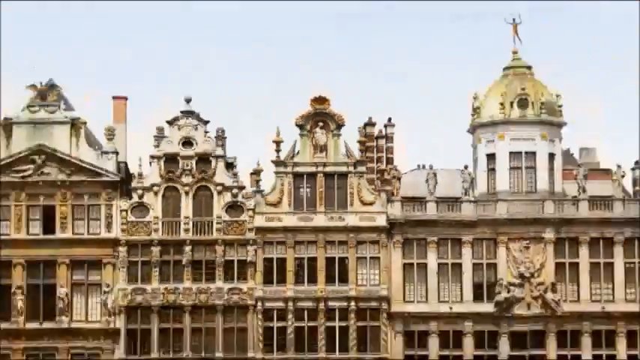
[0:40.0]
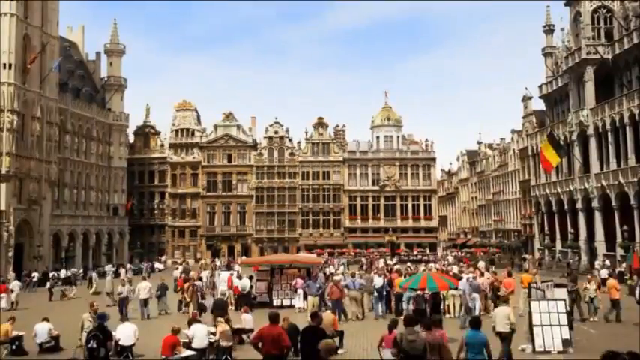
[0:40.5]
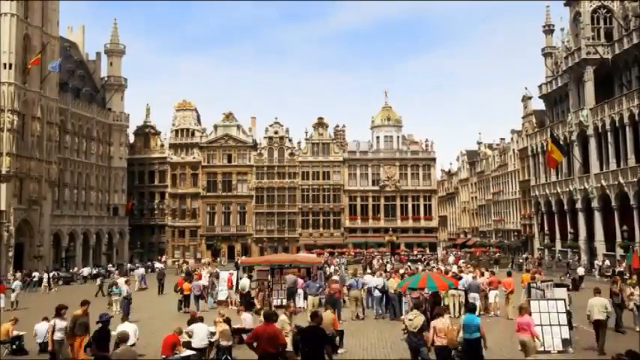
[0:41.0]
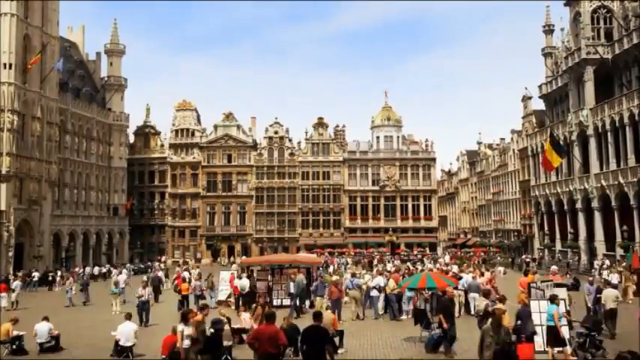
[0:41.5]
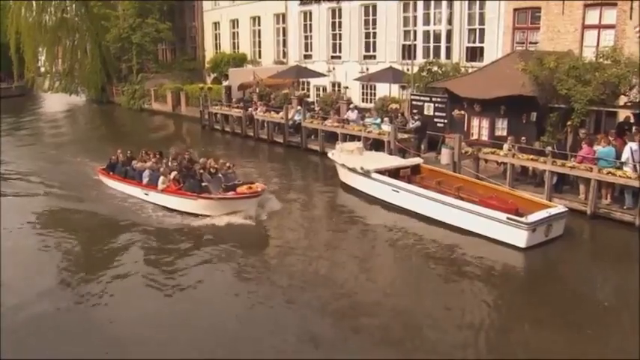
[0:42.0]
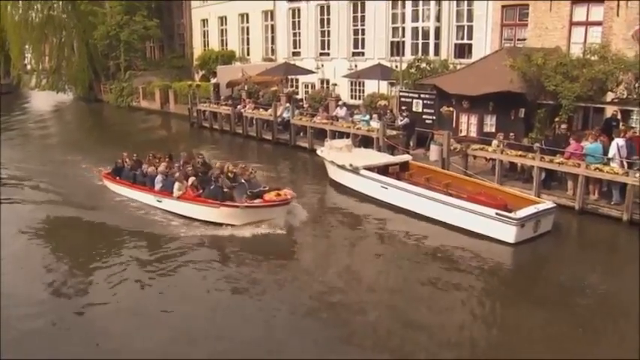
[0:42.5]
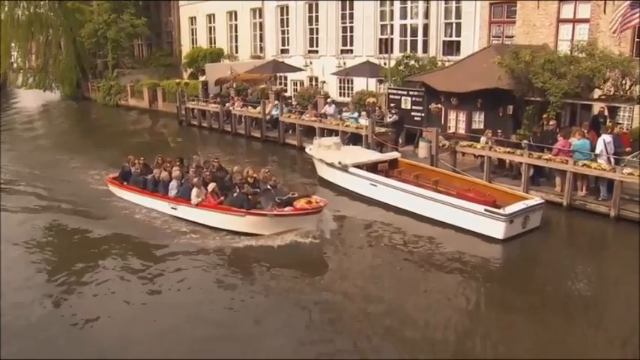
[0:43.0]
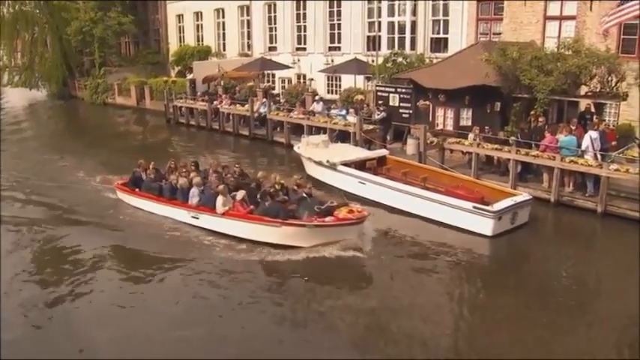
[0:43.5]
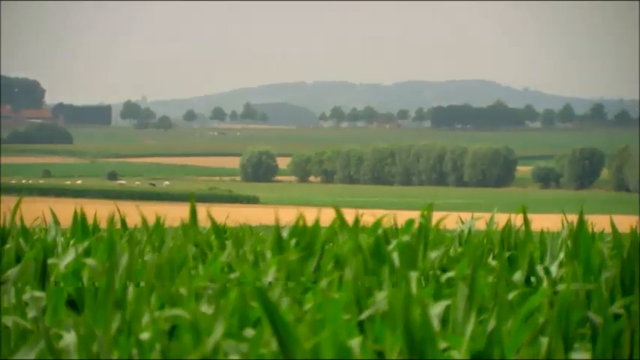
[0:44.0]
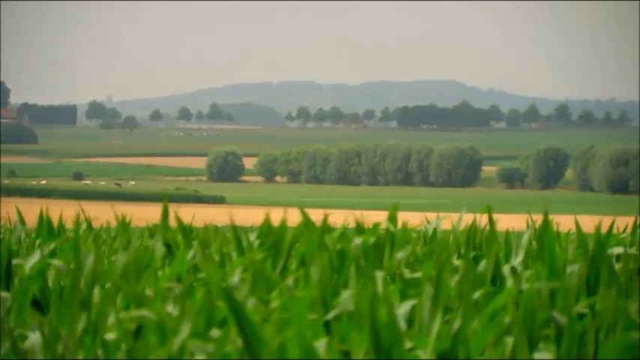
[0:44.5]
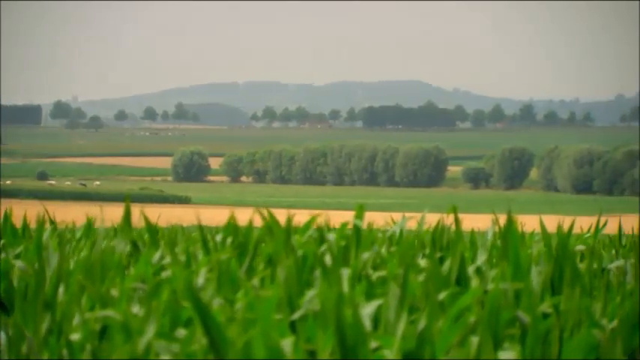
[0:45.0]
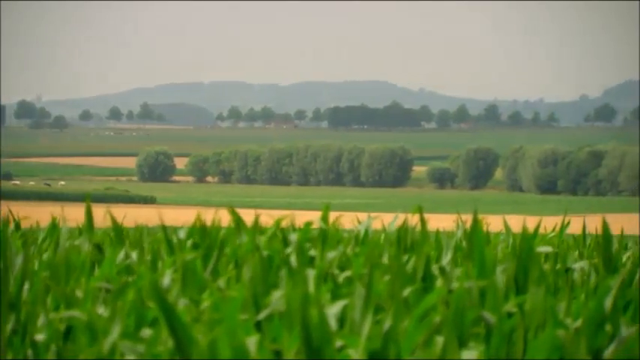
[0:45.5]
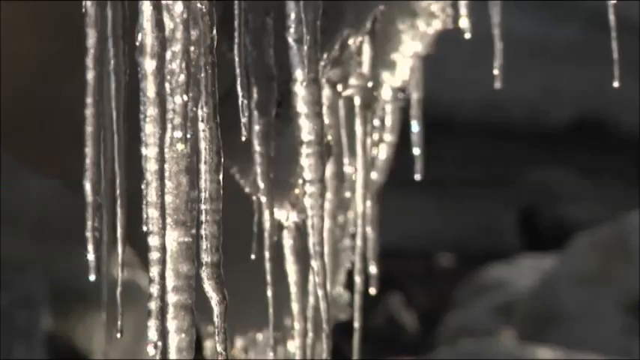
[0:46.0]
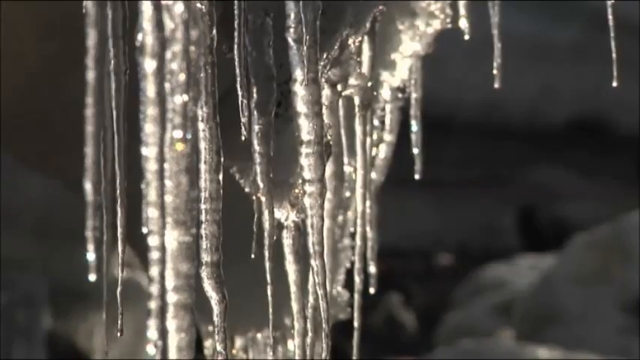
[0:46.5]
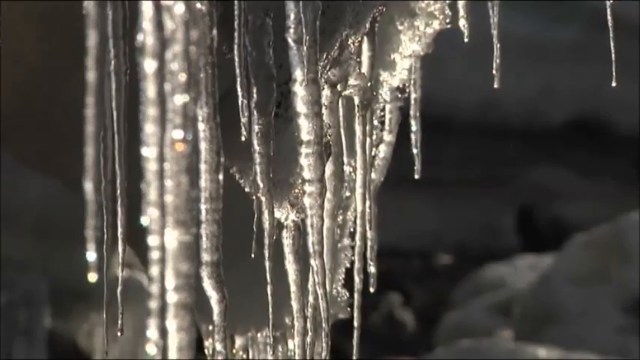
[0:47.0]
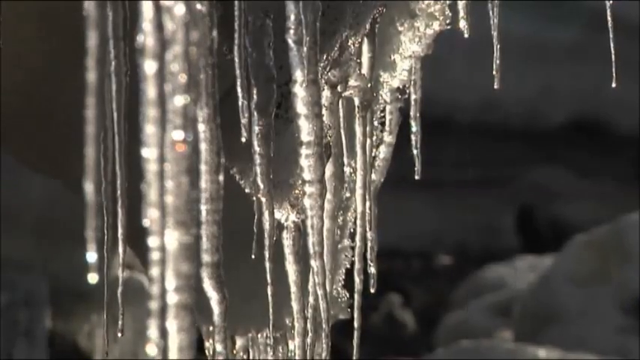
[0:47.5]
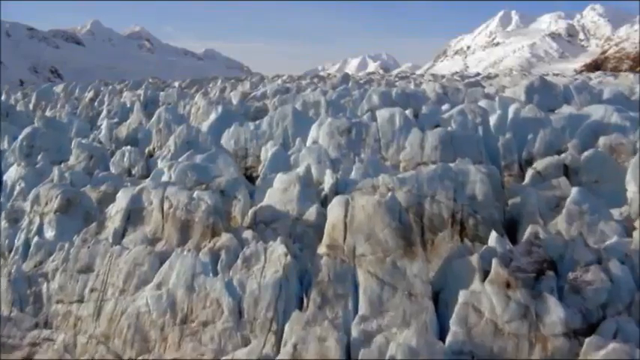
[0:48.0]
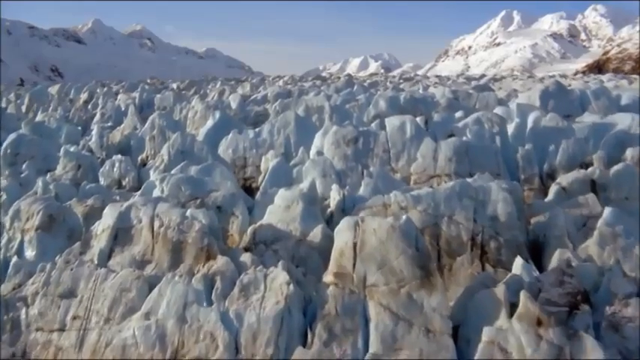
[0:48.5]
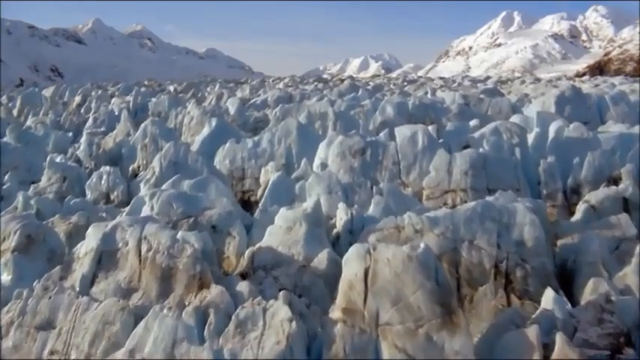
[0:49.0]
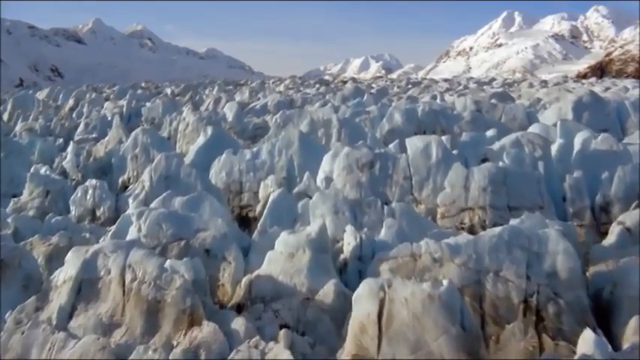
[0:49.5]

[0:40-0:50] The historical-looking buildings are shown; the one on the right has a gold dome on top with a statue of what looks like a person standing on their right leg, left leg extended behind them, both hands in the air. The scene cuts to a very busy city scene in front of these buildings, with people milling all about. Next, boats filled with people go quickly down a river in the city. Then comes a countryside with farms and crops, mountains and hills in the background, trees, and brown plowed fields with what looks to be cows and sheep in the background. A close-up shows small icicles hanging in front of a dark background, slowly dripping. The video then cuts to a dirty-looking glacier area as the camera pans across the top of it.